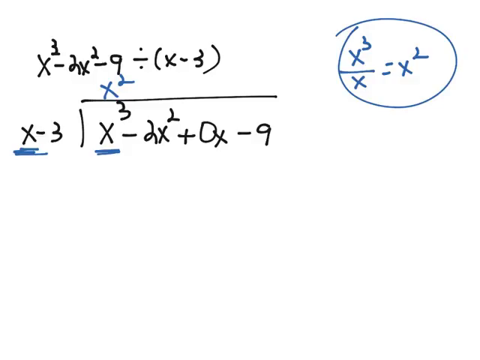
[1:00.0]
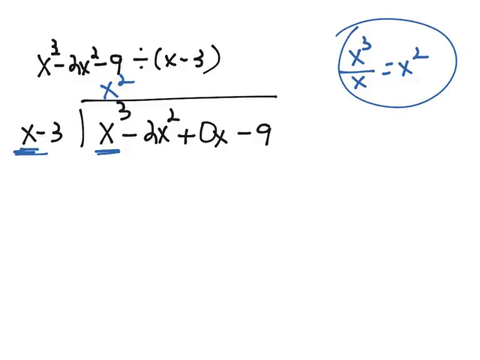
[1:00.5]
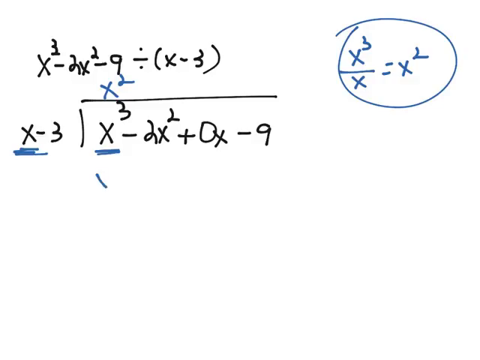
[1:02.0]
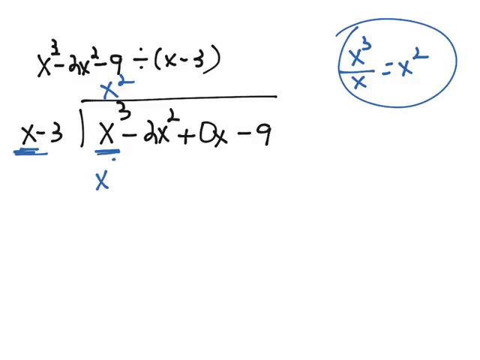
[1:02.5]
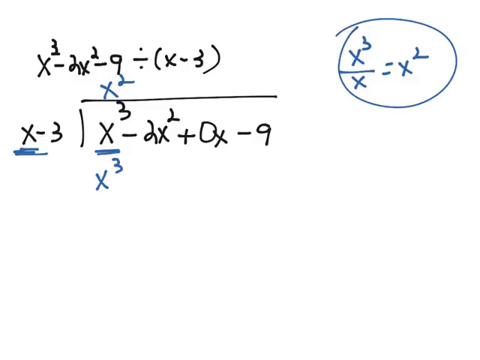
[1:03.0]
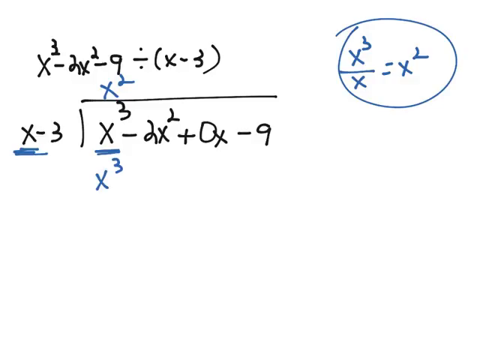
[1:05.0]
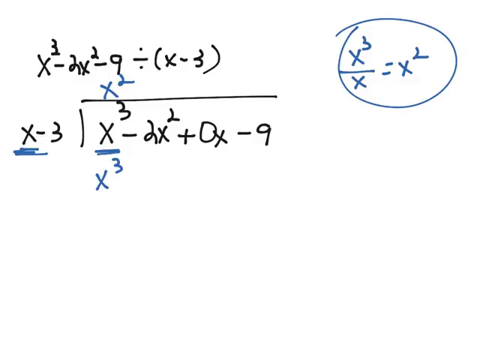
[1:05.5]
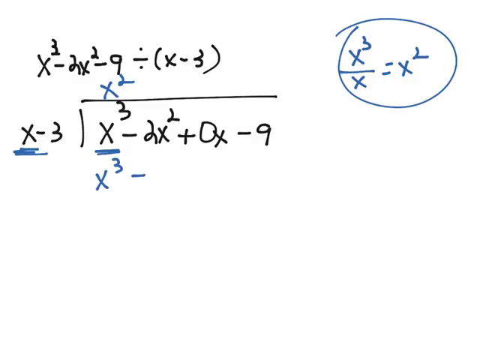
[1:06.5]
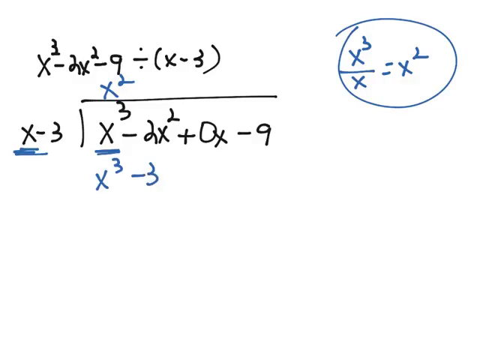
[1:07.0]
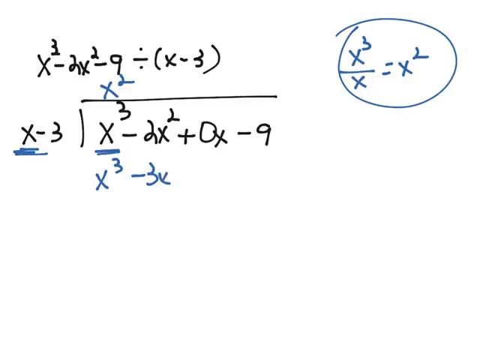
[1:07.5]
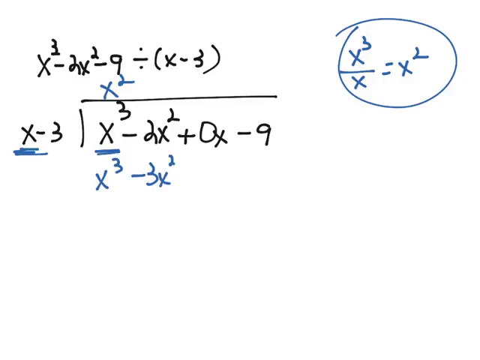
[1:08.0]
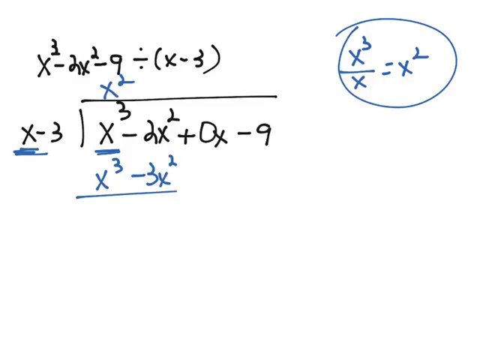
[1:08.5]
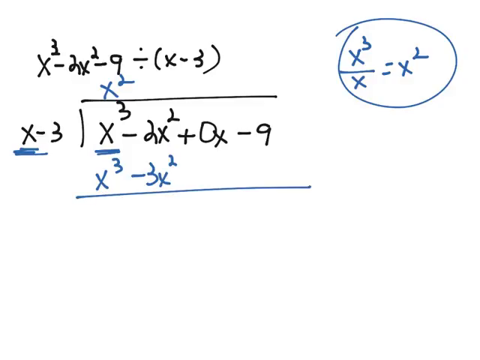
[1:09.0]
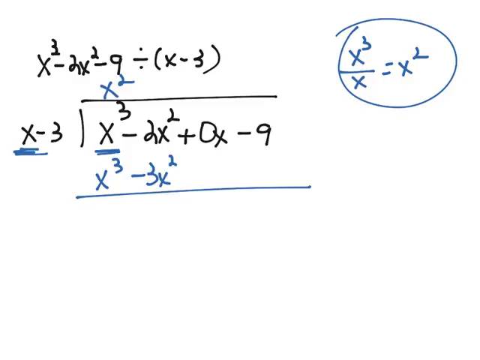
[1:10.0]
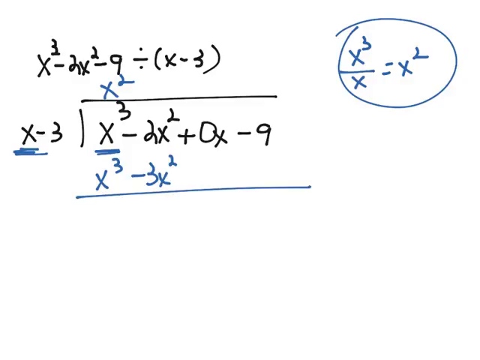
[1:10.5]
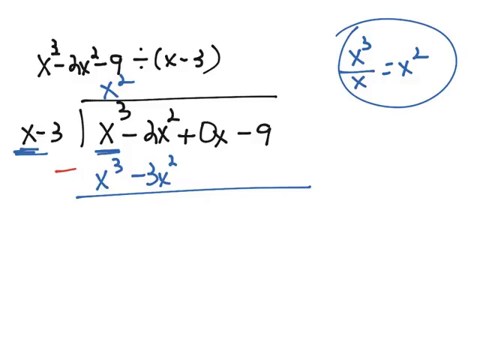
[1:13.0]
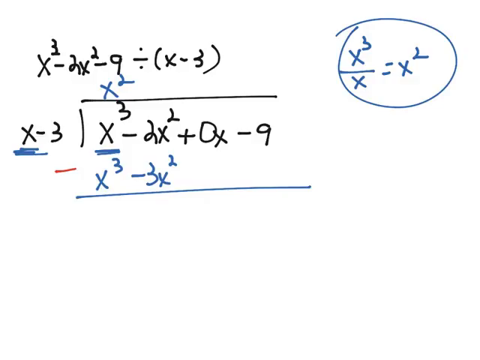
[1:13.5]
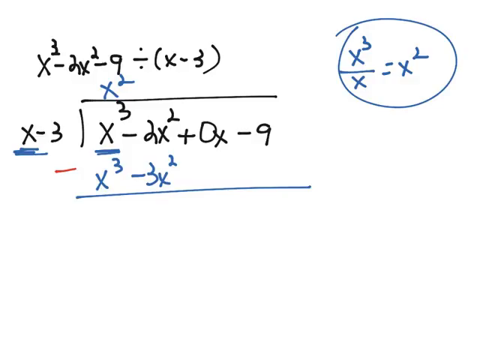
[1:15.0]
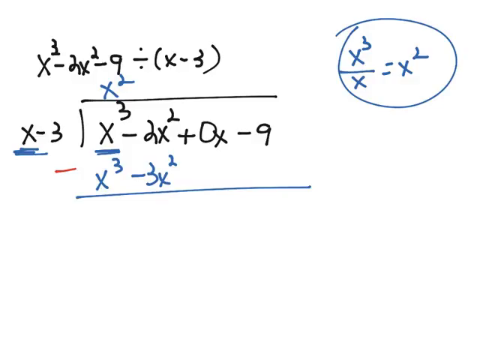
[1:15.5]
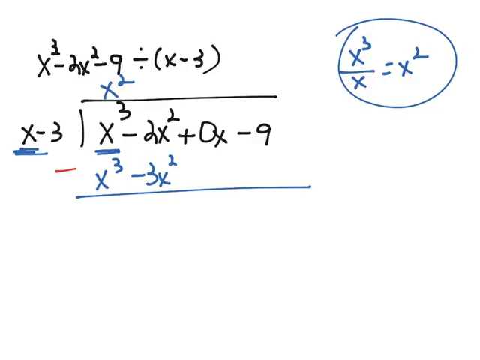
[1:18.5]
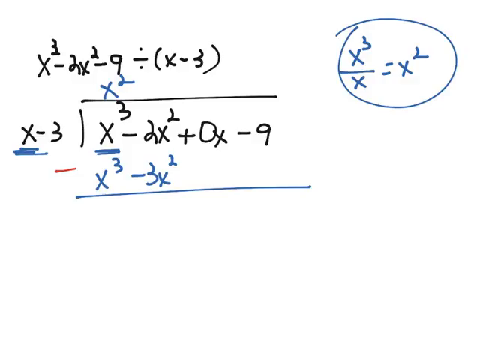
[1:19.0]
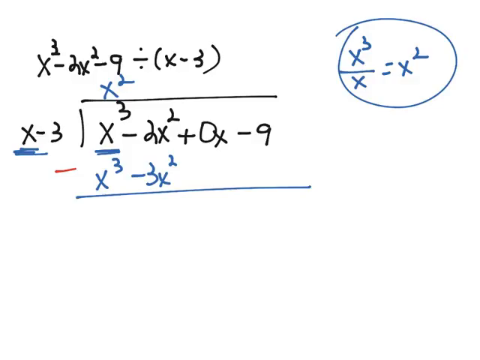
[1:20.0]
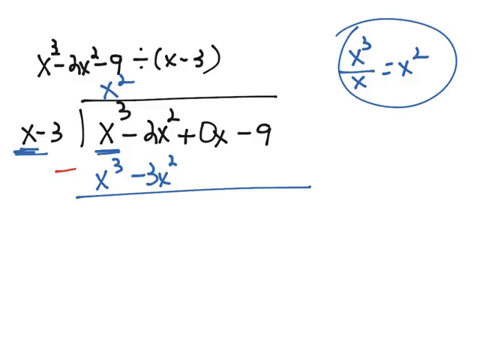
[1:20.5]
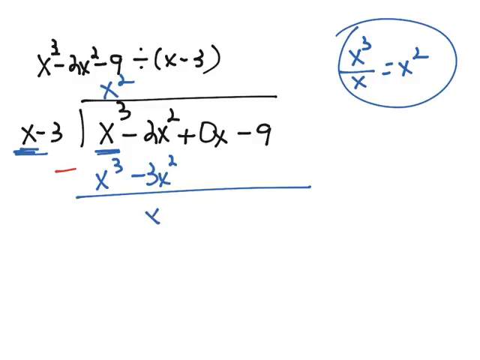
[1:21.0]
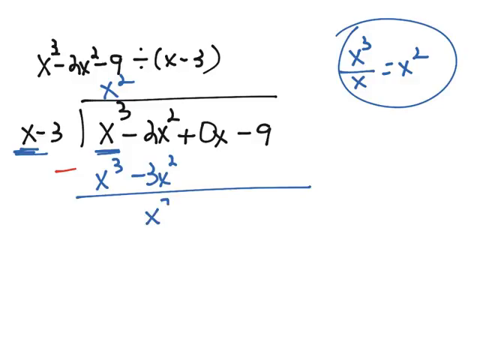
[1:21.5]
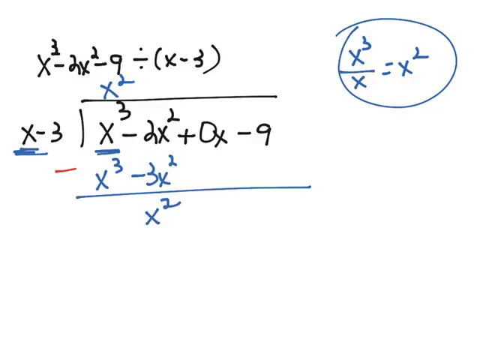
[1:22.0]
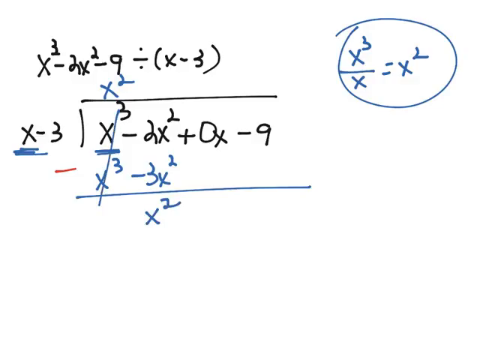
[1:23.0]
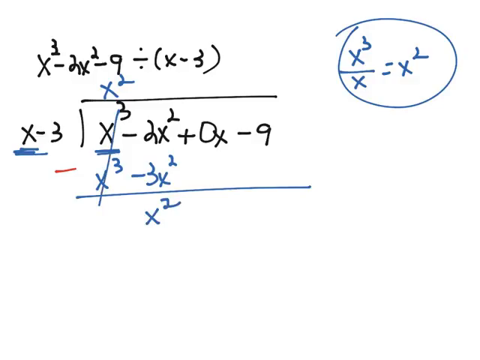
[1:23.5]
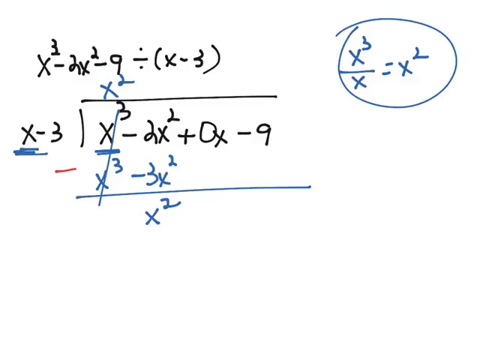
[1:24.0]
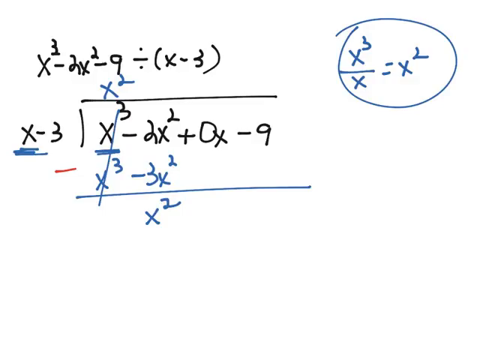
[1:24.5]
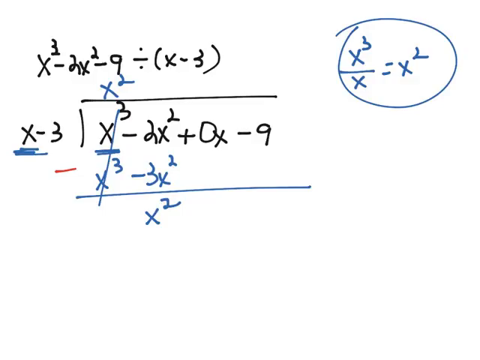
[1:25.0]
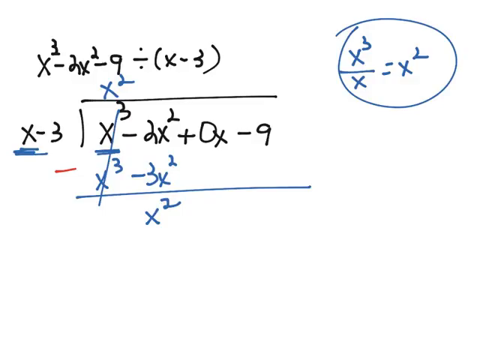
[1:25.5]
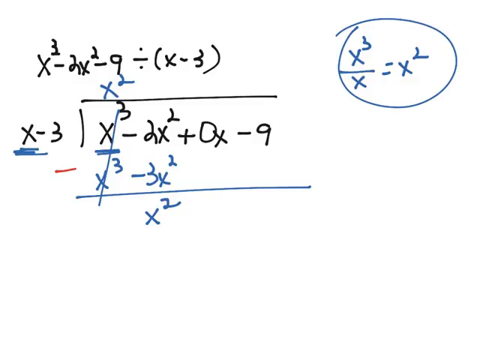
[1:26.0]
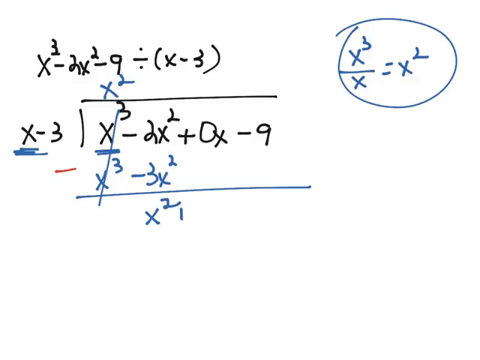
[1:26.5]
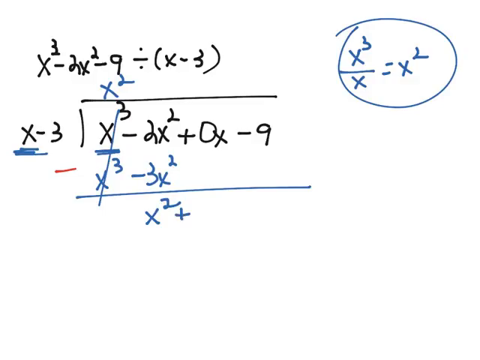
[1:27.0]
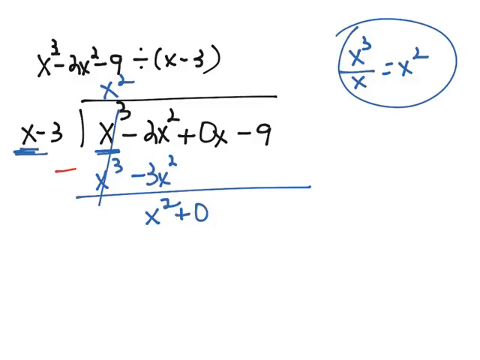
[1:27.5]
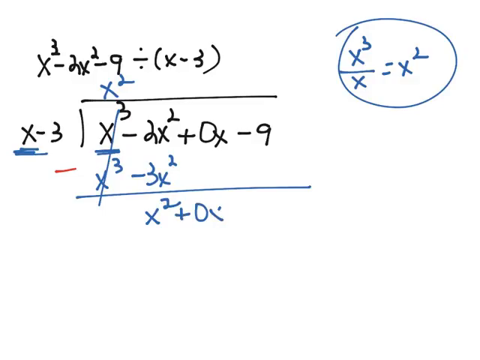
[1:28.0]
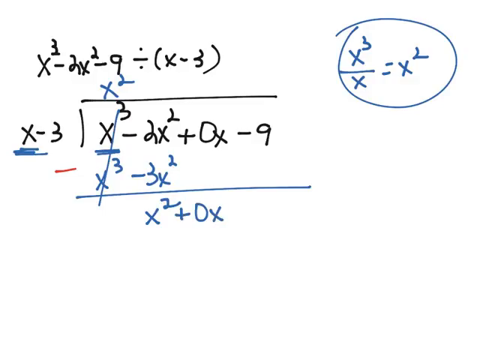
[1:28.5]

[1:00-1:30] The equation x³ − 2x² − 9 divided by (x − 3) is at the top, and below it x³ − 2x² + 0x − 9 is divided by x − 3. A blue x² is written with squiggly lines under the two x's. In the upper right corner, x³ ÷ x = x² is circled with a blue line. A blue x³ is written under the black x³, followed by − 3x², with a blue line under them. A red line then appears on the screen, and "x minus" is written next to the blue x³. Next, x³ − 3x² is shown being divided by x². A blue line is drawn between the black x³ and the blue x³, and under the blue line, to the right of x², + 0x is written.